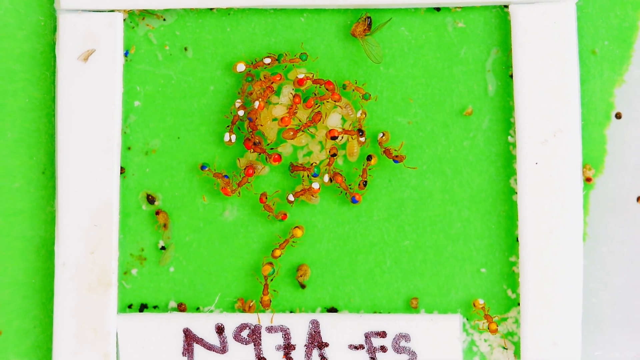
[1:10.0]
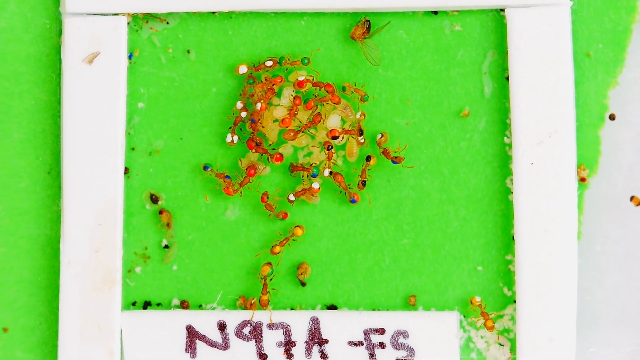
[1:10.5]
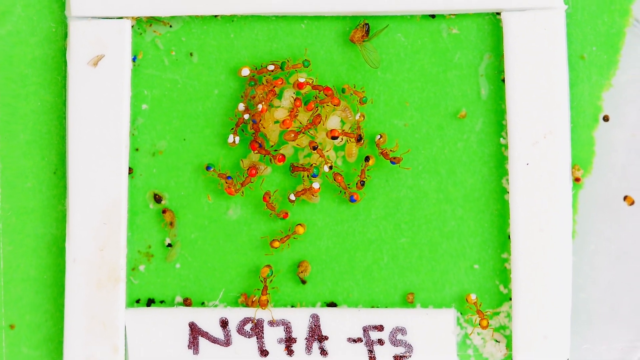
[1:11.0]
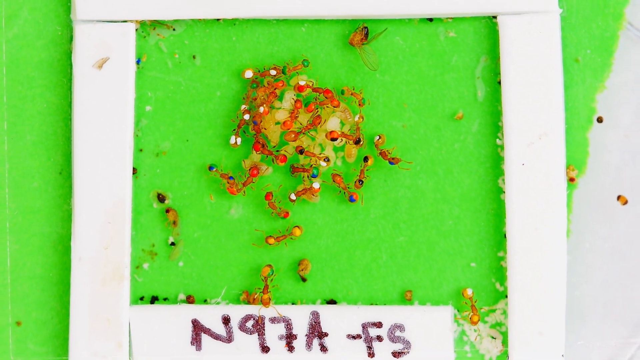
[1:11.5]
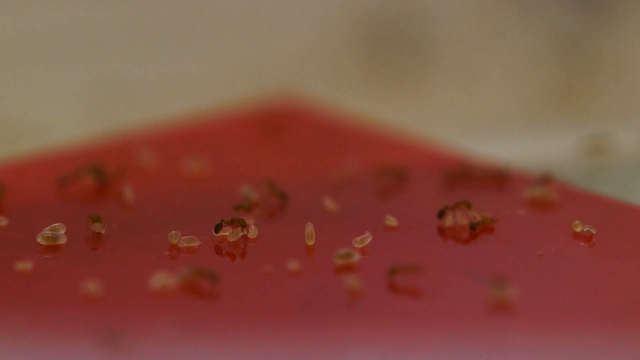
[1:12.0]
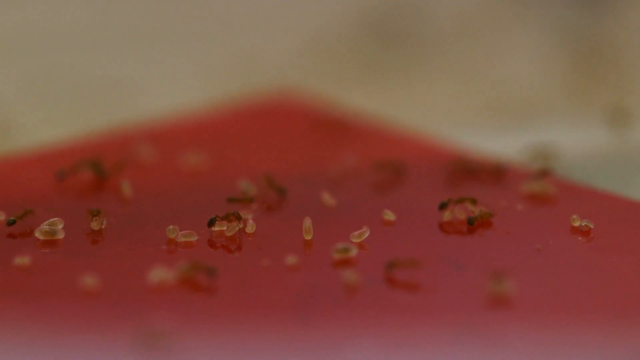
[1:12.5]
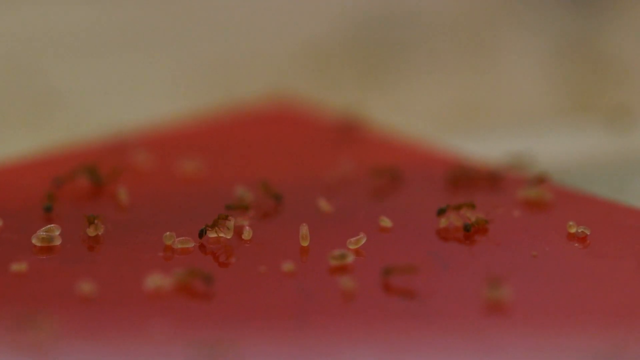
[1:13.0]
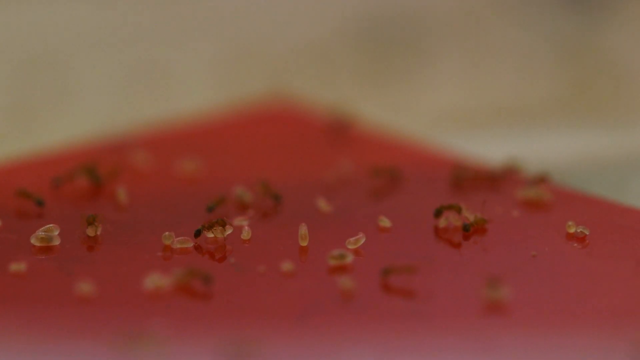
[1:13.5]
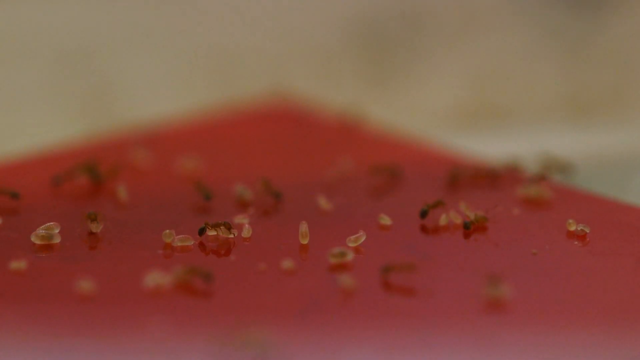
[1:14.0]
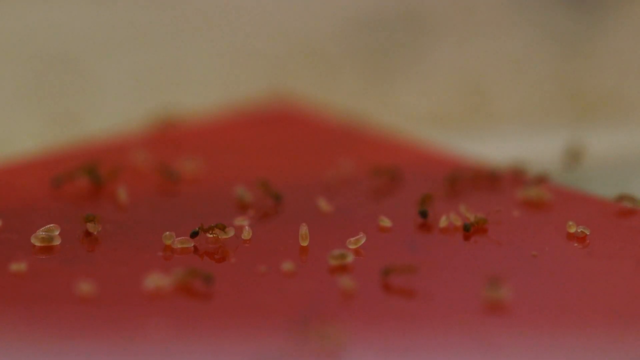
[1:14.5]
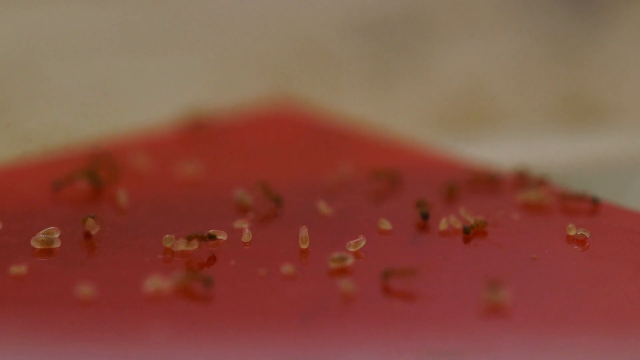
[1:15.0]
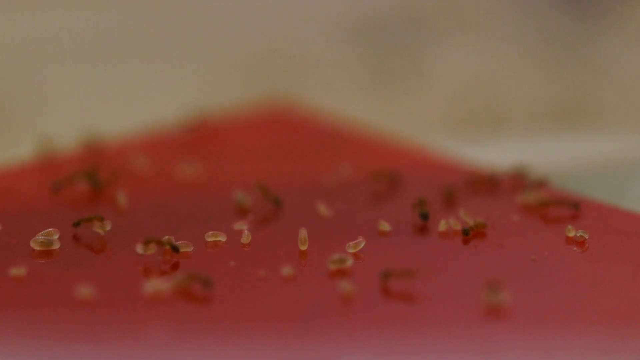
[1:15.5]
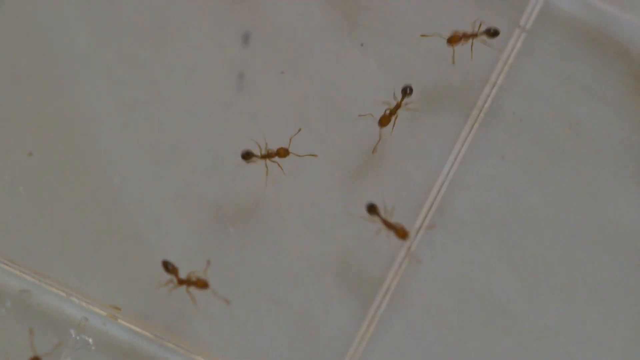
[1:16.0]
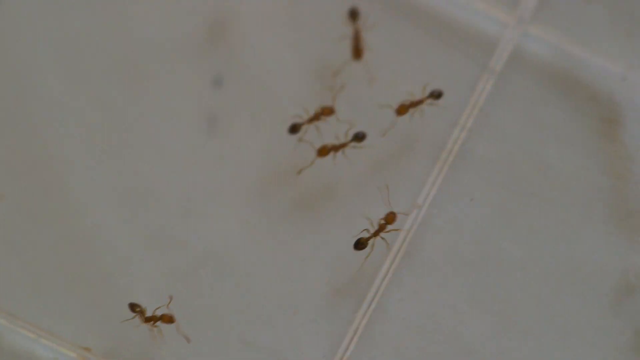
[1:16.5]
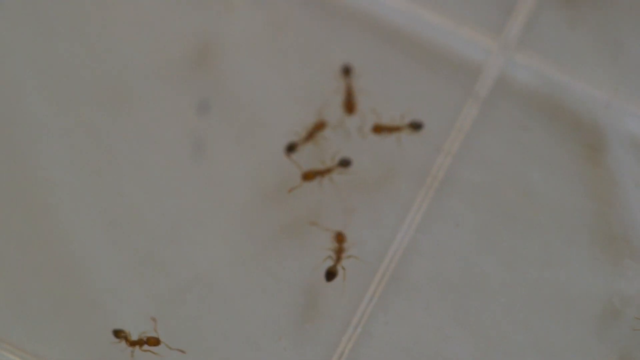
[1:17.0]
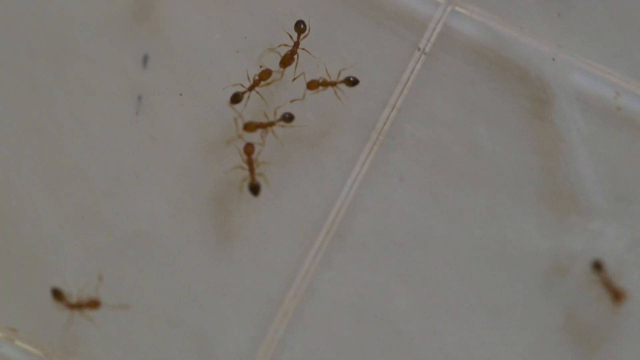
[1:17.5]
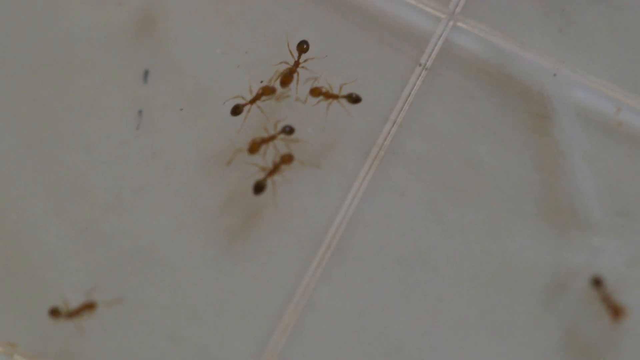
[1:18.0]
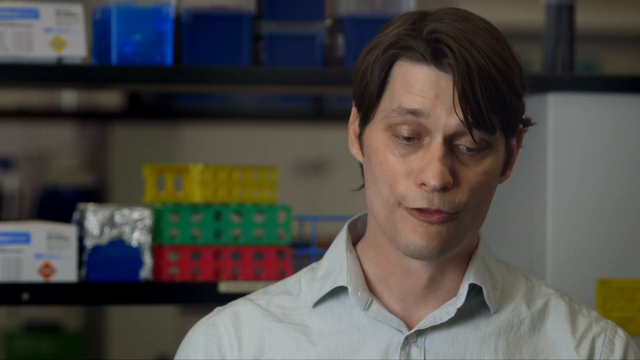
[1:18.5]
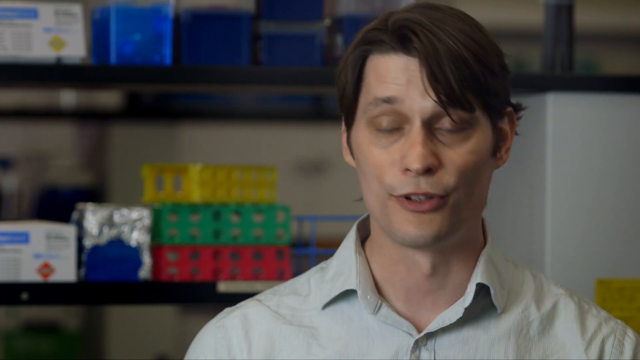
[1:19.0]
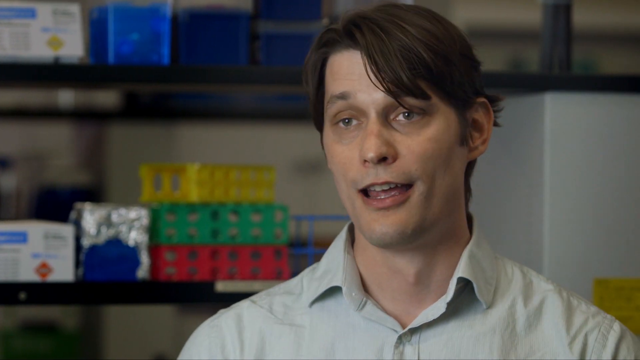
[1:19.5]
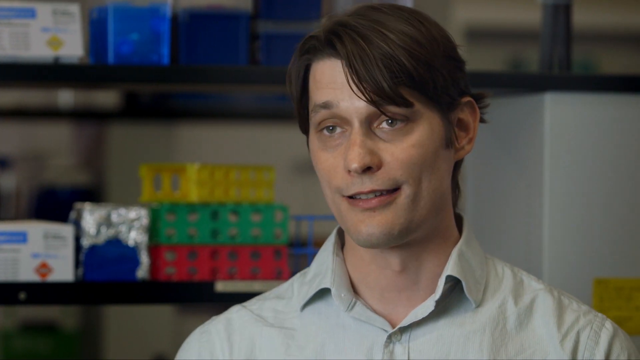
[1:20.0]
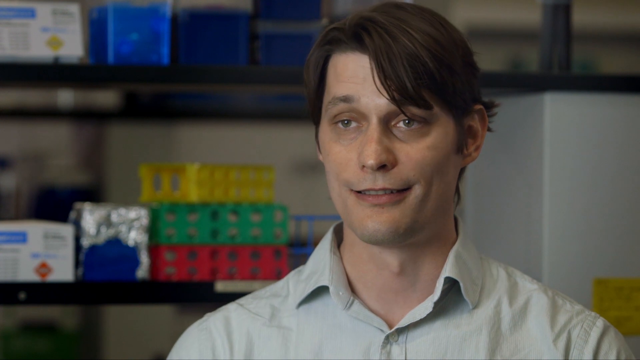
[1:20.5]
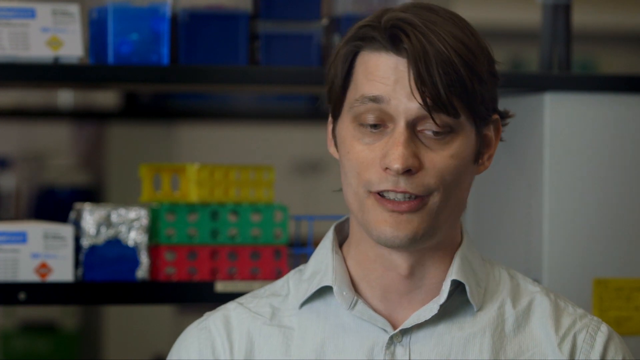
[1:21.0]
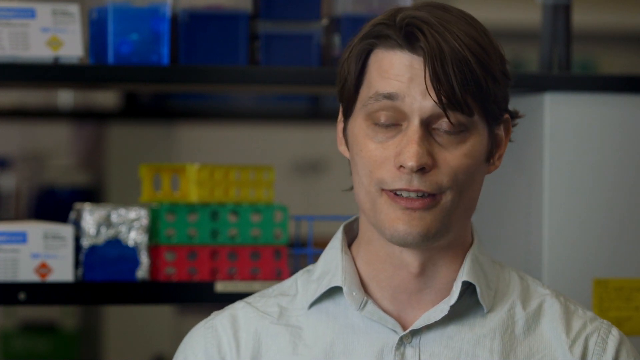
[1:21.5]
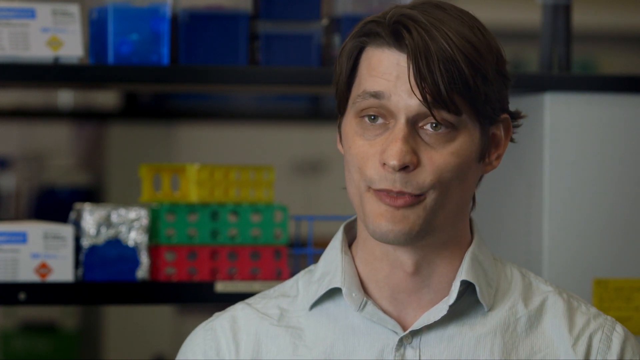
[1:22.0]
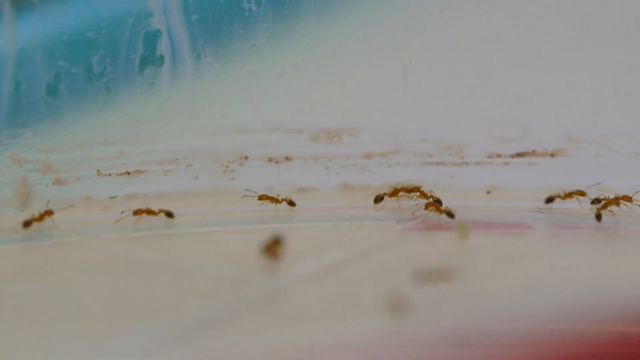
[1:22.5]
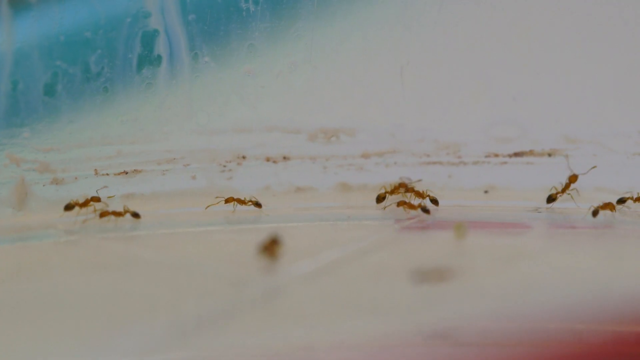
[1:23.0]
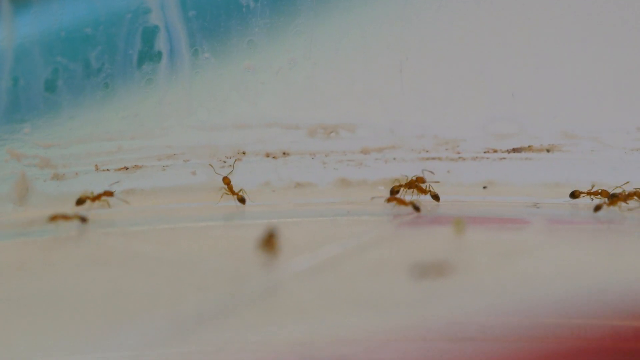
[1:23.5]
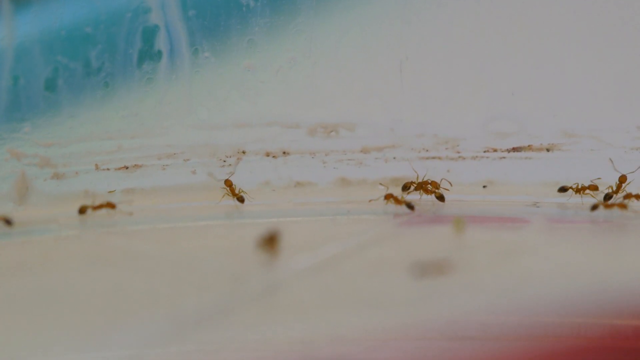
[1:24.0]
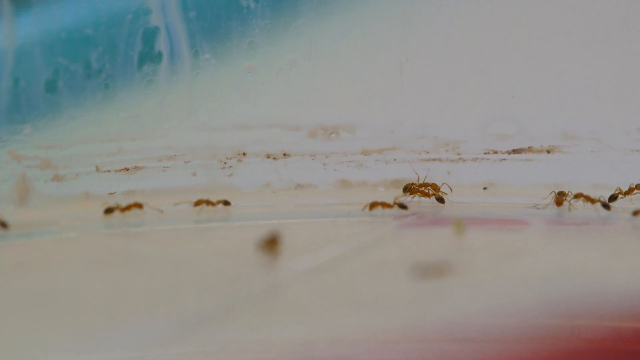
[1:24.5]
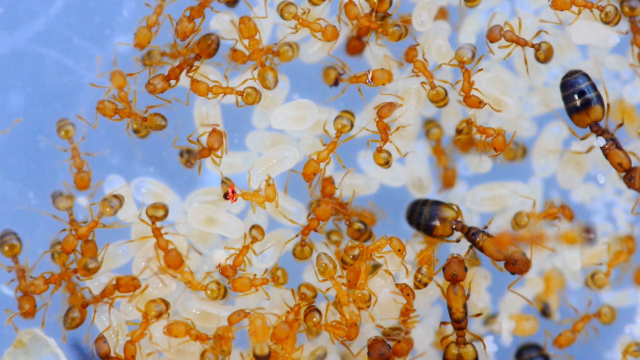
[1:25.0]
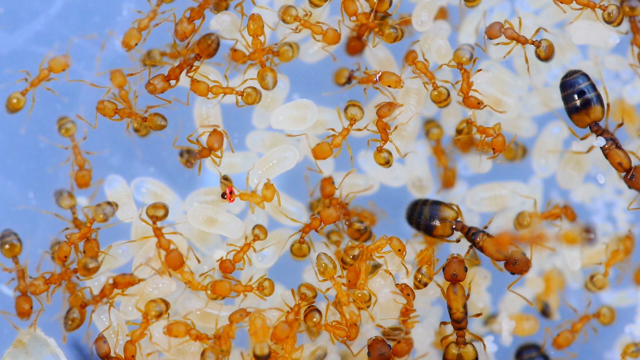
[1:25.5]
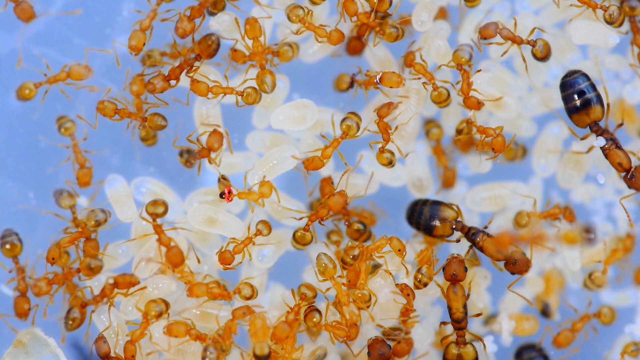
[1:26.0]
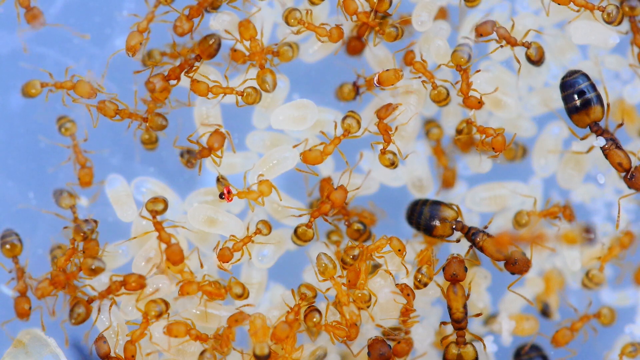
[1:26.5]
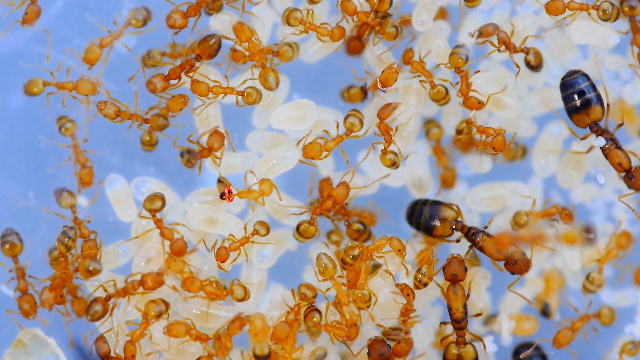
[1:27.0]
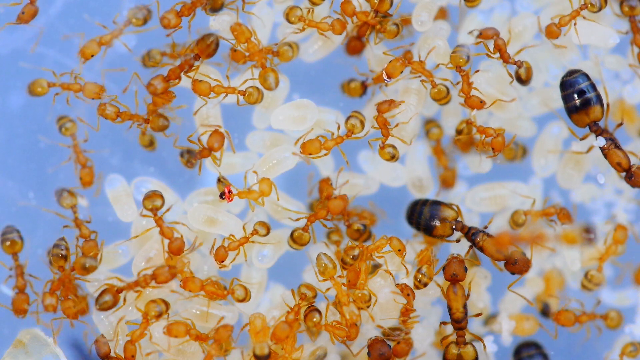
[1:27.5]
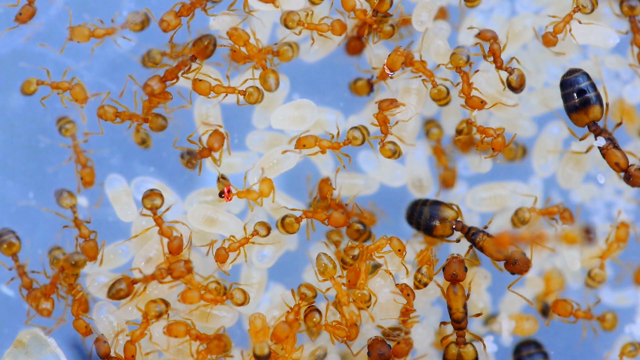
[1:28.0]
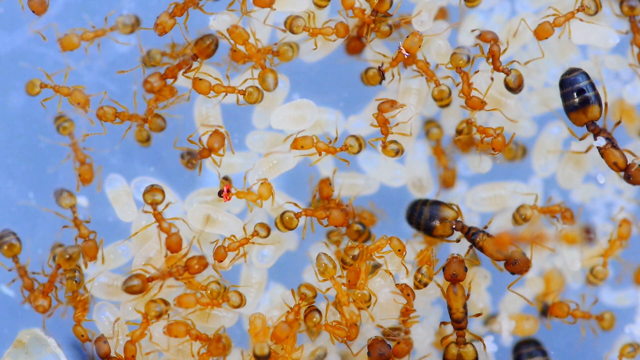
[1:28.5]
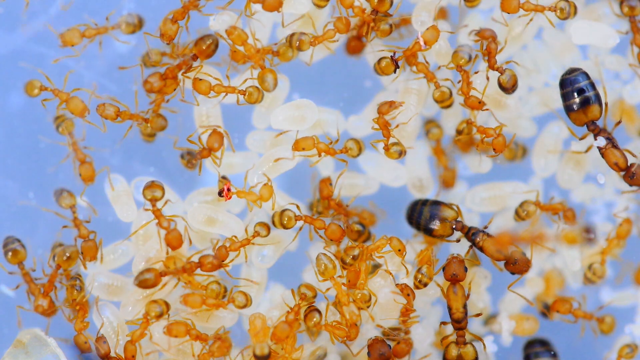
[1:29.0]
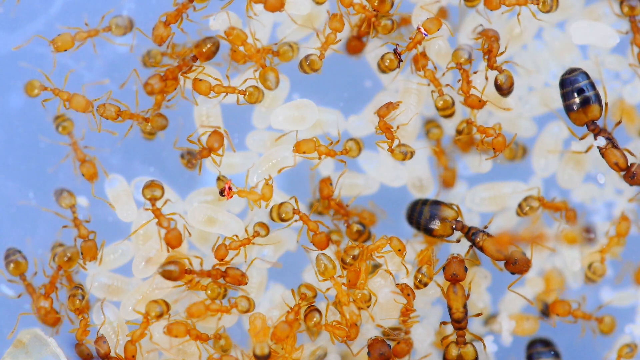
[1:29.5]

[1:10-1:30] An overhead image looks down on ants on a bright lime green surface. On either side of this surface are strips of white that look like a frame holding them in. The ants are mostly clustered in the center, and below them are numerous translucent, off-white eggs. The ants move around slightly; some are on top of the eggs, some crawl on the outside of them. The image switches back to the red surface, with fewer ants and fewer white eggs; the ants move as though picking the eggs up and taking them away. Next, a white tiled surface has six ants visible, with darker brown bodies and bulbous black ends; they scurry around and meet in the center. The video switches to the man with his hair swept over his left eye, the assistant professor of biology, speaking to the camera. He nods his head back and forth as he talks and looks down to his side. A view taken from the ants' level shows eight ants altogether on some sort of light-colored surface, walking back and forth slightly. Then the view returns to the ants on top of the white eggs with a blue screen behind.